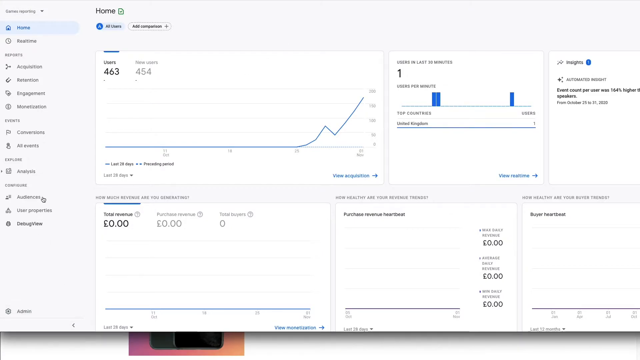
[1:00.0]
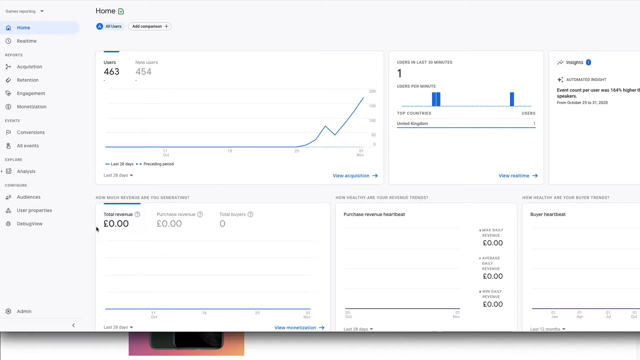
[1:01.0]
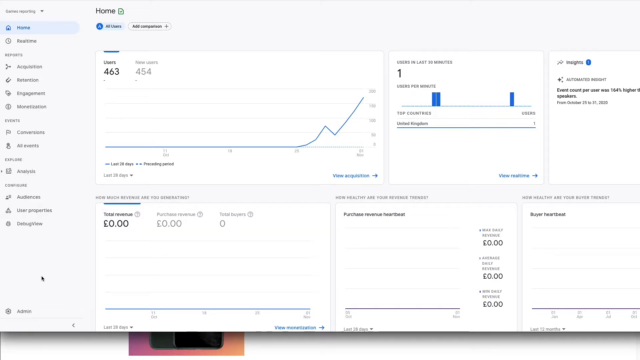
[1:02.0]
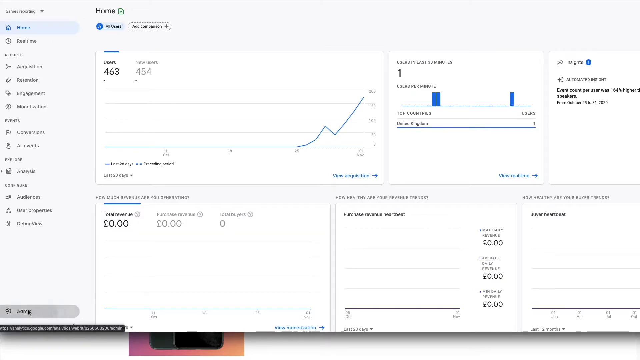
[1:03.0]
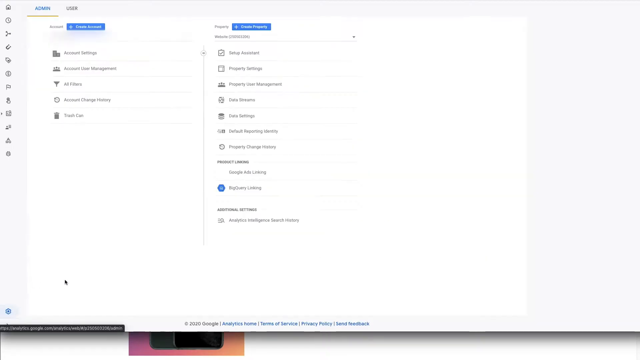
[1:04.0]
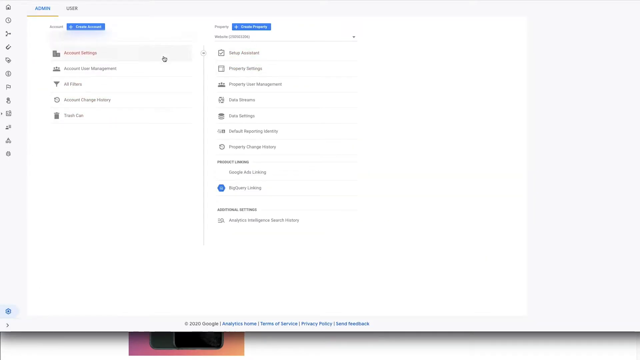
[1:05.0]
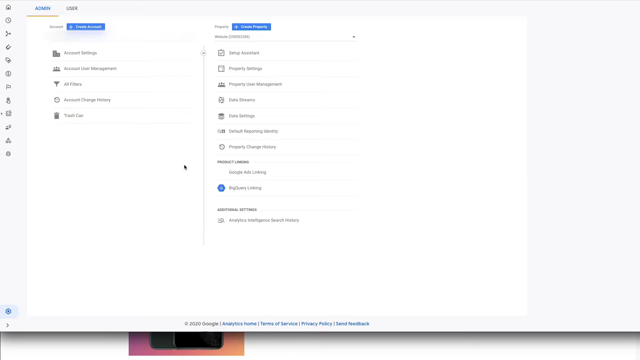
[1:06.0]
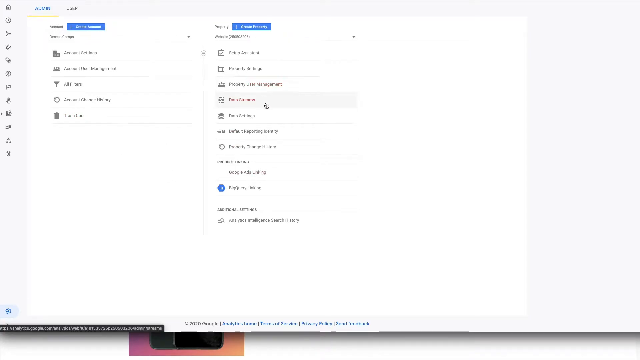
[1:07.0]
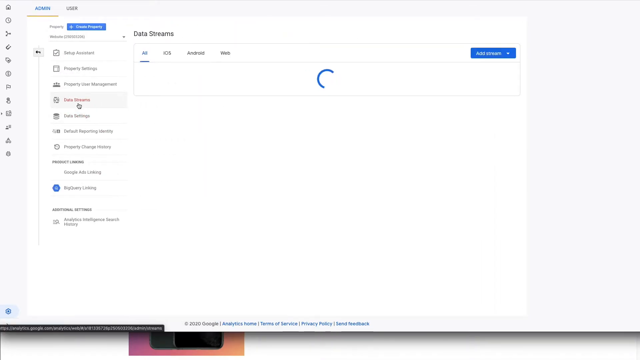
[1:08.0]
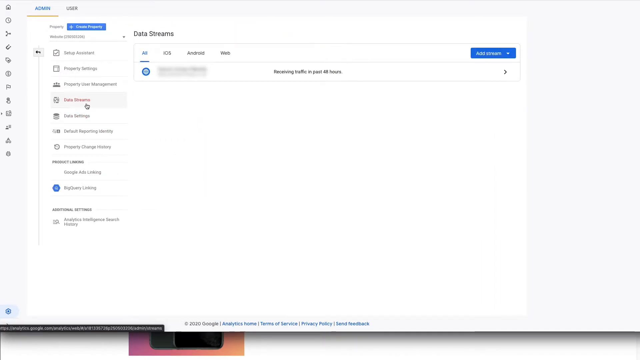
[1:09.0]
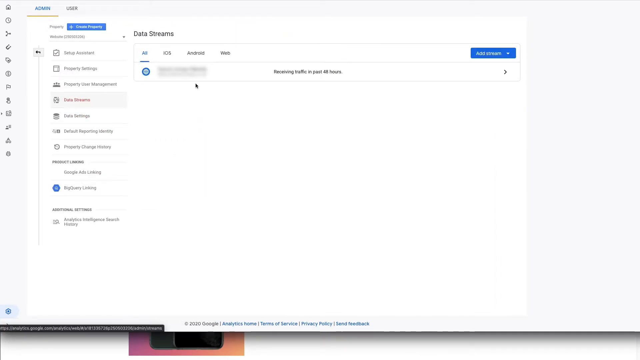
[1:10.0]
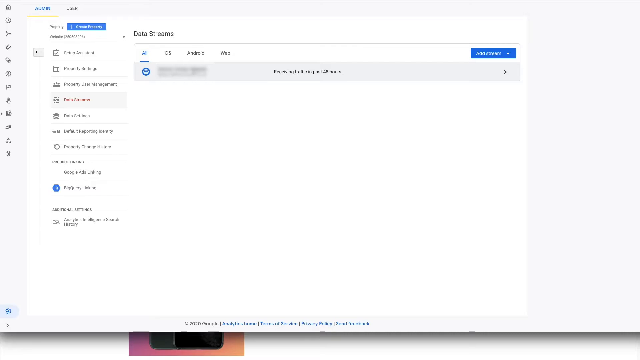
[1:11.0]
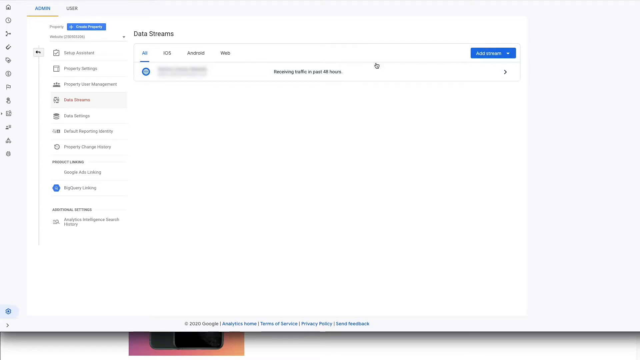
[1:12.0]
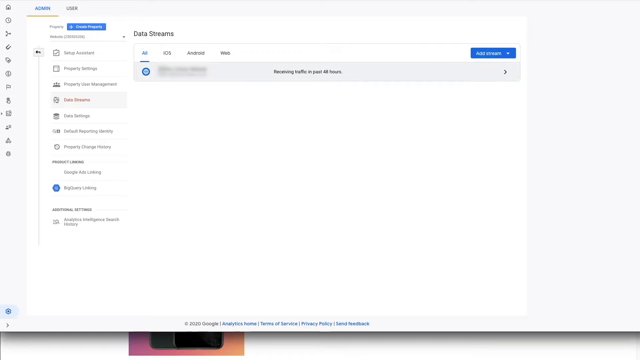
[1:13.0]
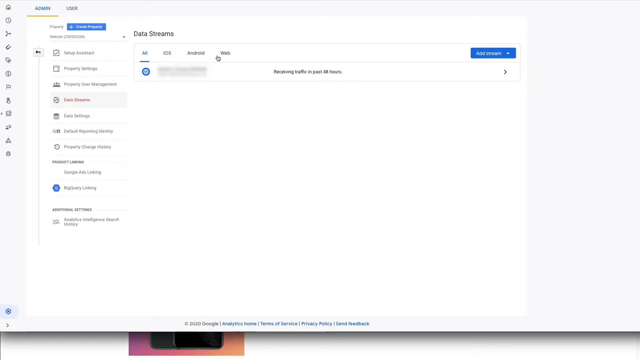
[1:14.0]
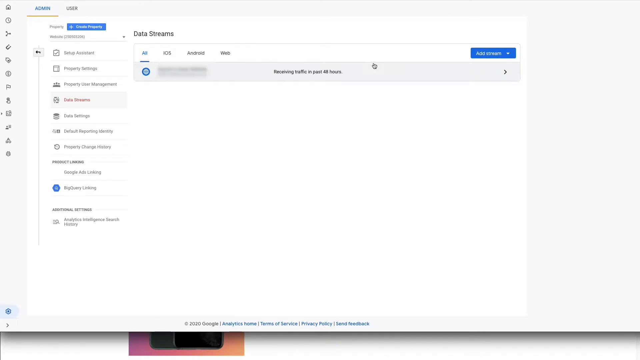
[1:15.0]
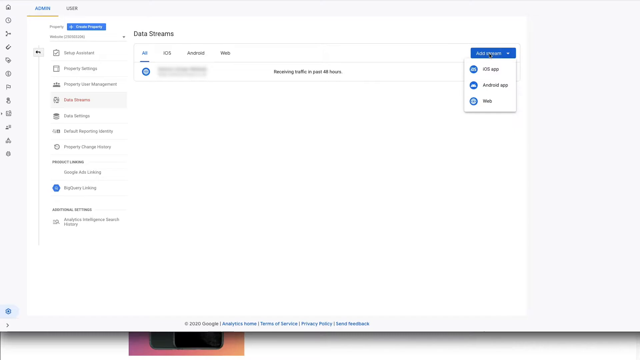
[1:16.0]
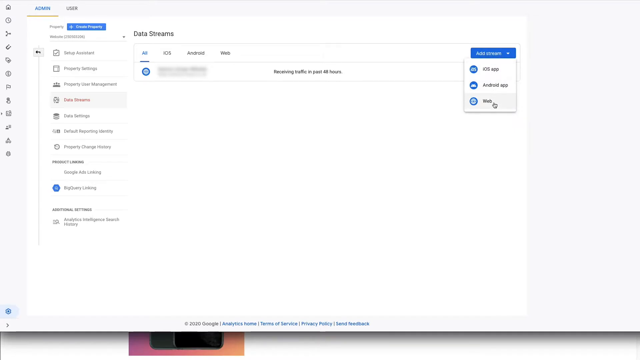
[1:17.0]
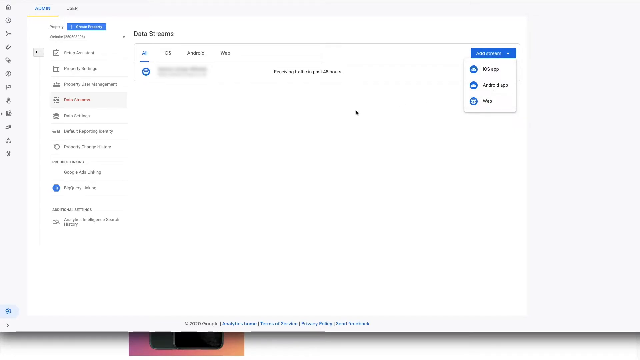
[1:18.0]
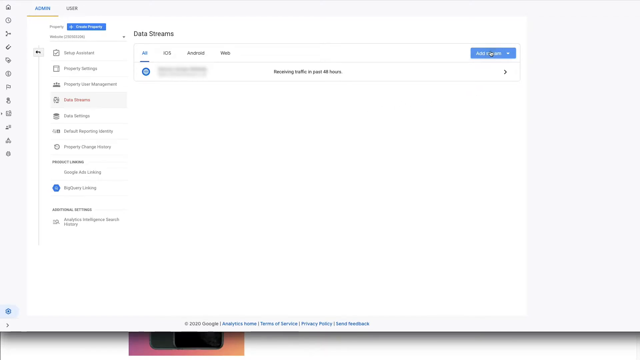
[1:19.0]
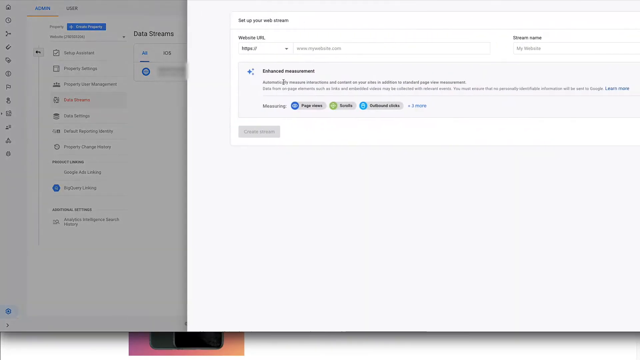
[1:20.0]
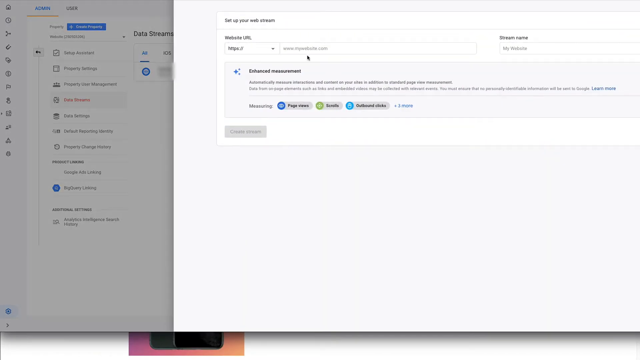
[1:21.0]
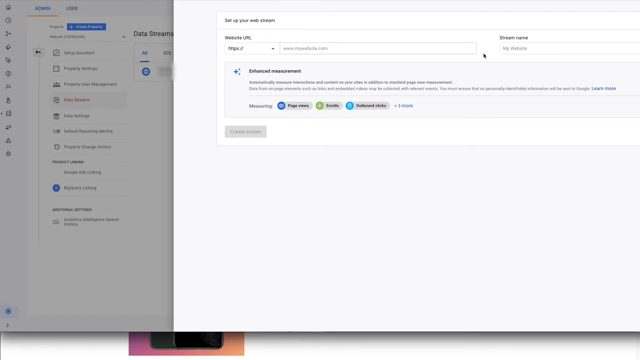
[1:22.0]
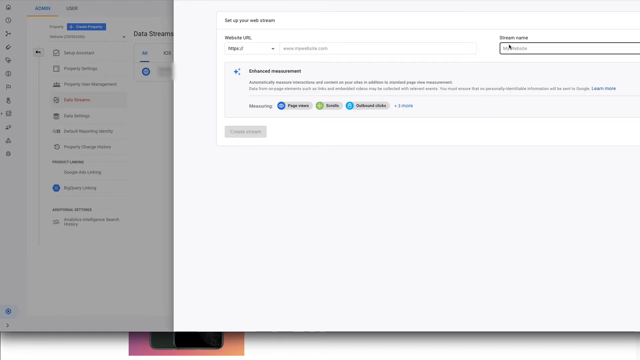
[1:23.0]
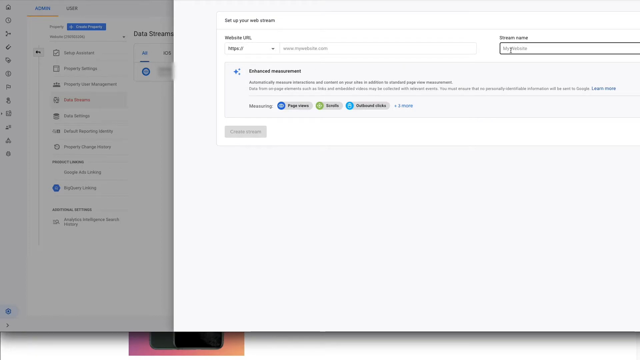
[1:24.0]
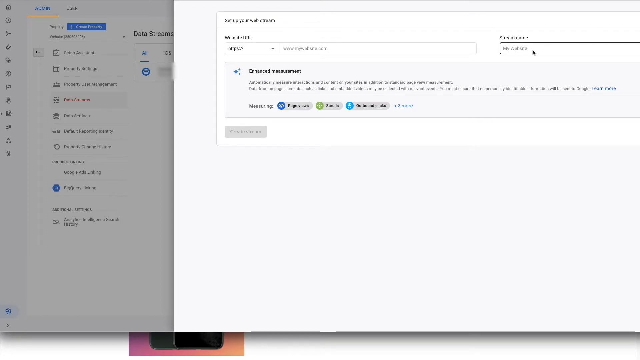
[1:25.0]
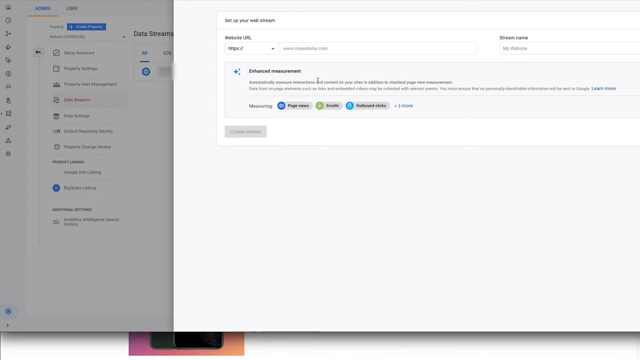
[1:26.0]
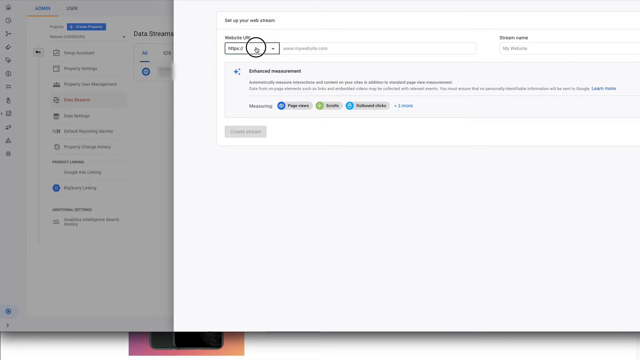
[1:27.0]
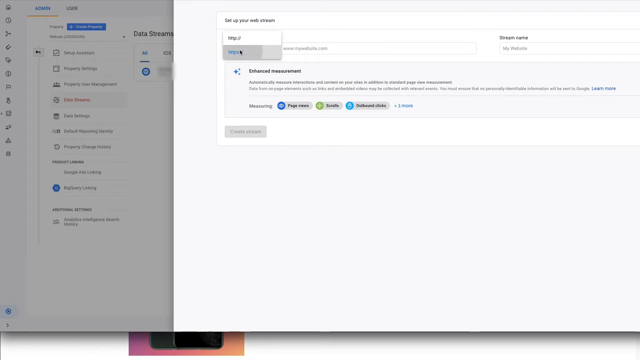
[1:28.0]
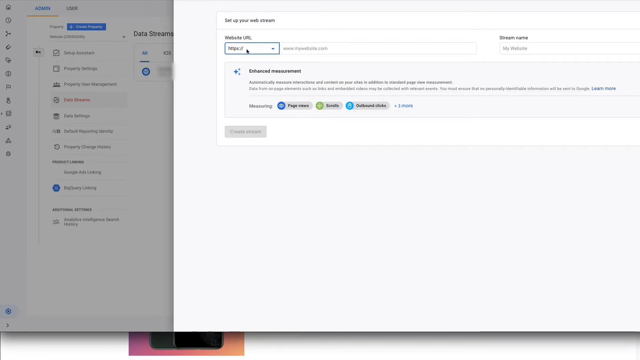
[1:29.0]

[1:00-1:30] The person selects the last option on the left-hand menu, bringing up more information. The earlier home view seemed to be an overview, and this new view drills down further in Google Analytics into what appears to be an admin area for changing views or settings. The new active window has an admin option and a user option. The text is small and not all of it is legible, but there appear to be items for account settings, account user management, filters, account change history, and one unclear last item. A menu to the right of that shows setup options: property settings, property user management, apparently data settings, event settings, default reporting settings, property change history, Google Ads information, and other analytics.